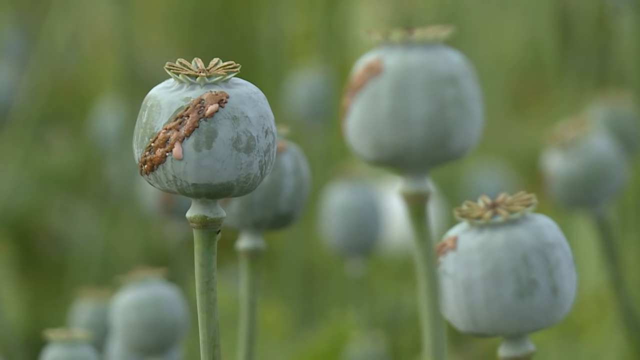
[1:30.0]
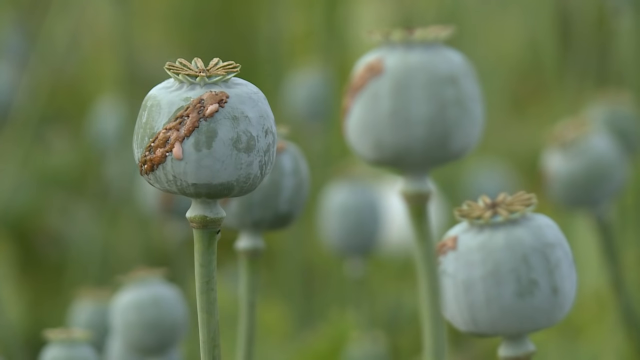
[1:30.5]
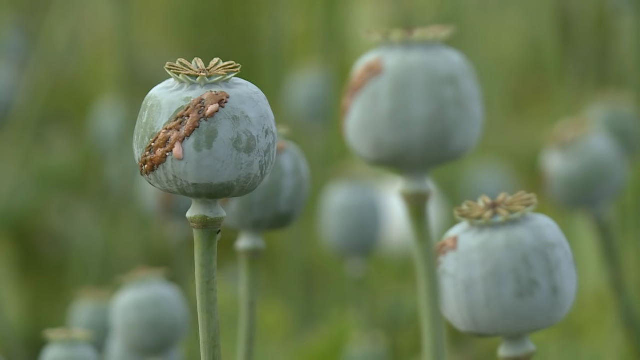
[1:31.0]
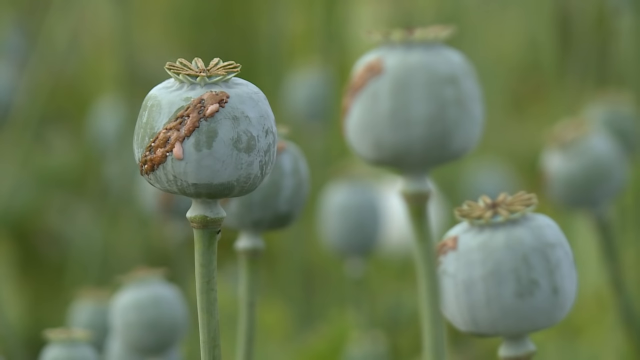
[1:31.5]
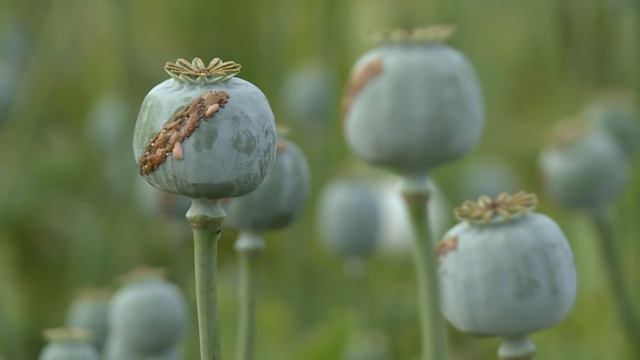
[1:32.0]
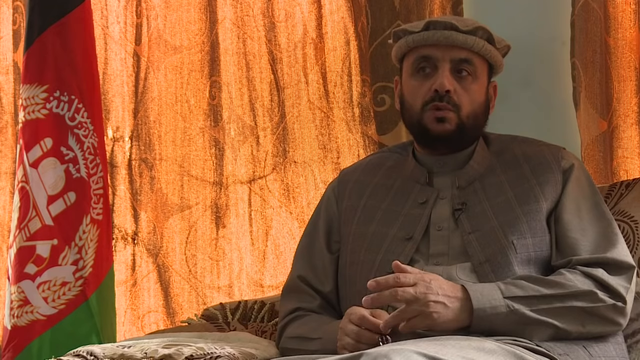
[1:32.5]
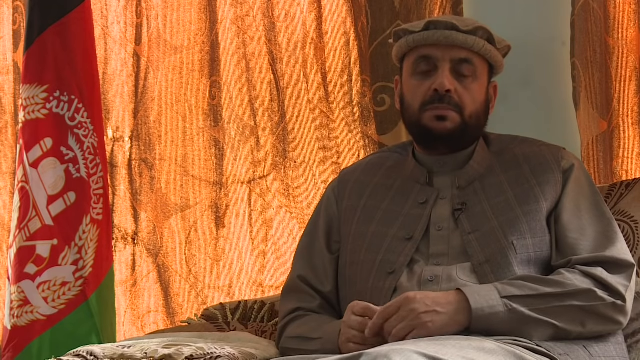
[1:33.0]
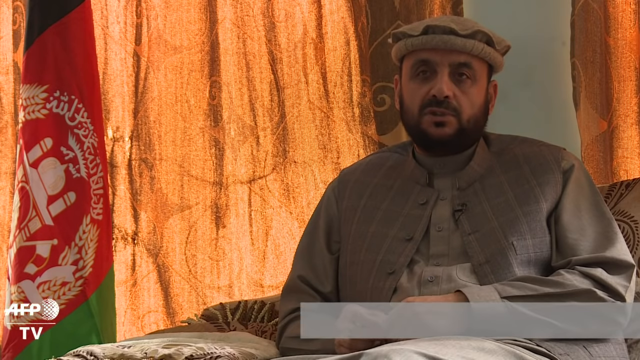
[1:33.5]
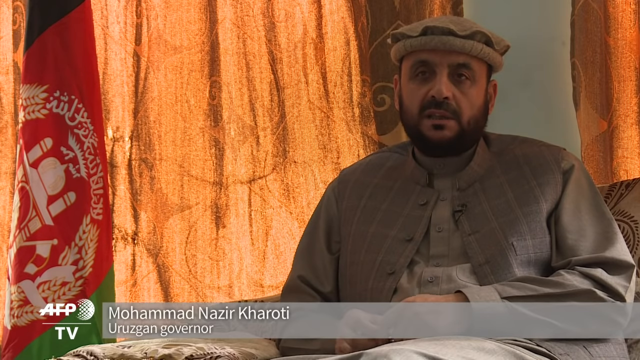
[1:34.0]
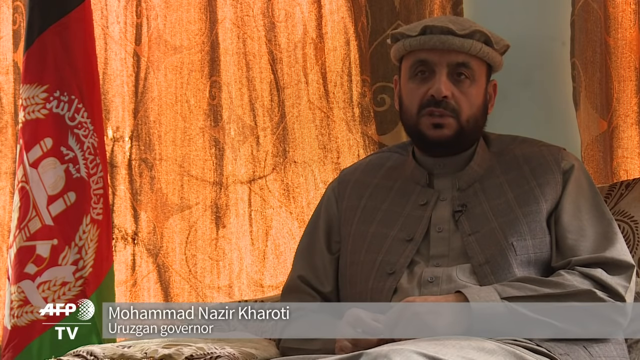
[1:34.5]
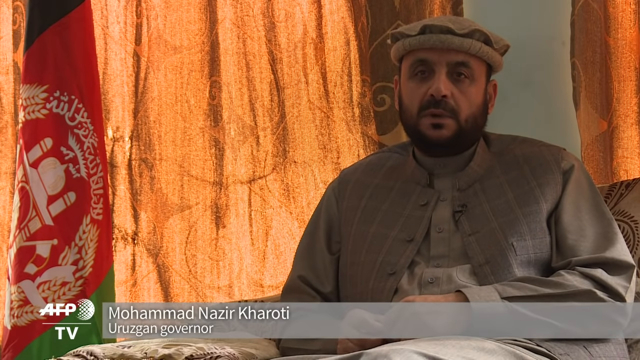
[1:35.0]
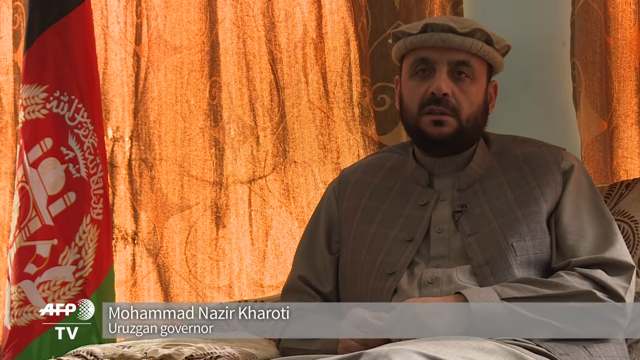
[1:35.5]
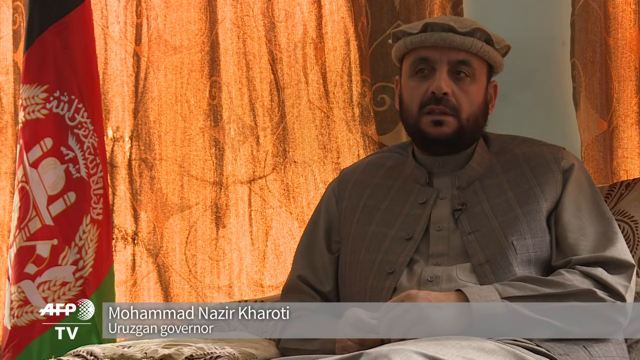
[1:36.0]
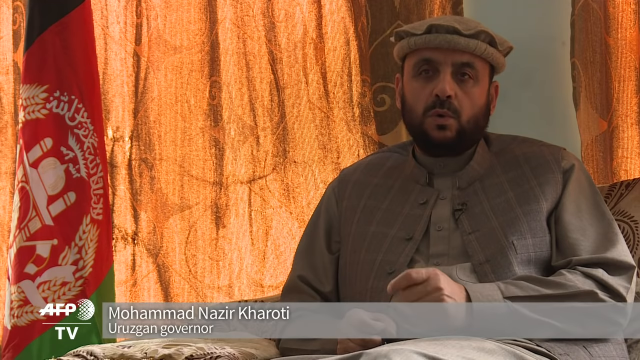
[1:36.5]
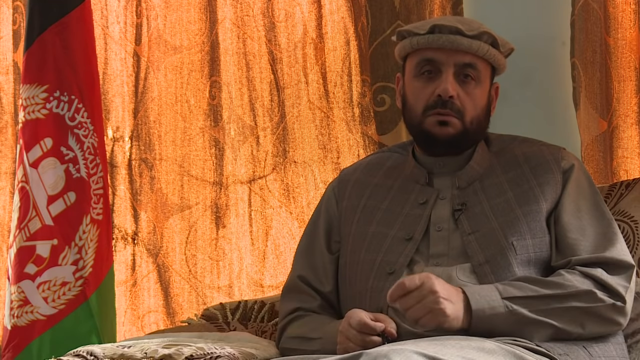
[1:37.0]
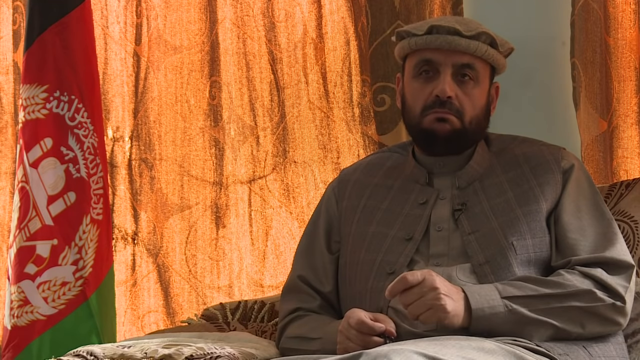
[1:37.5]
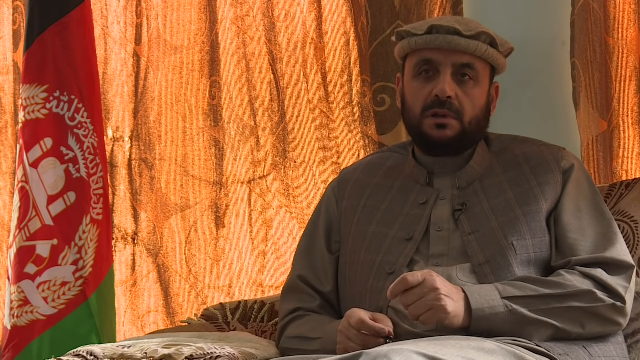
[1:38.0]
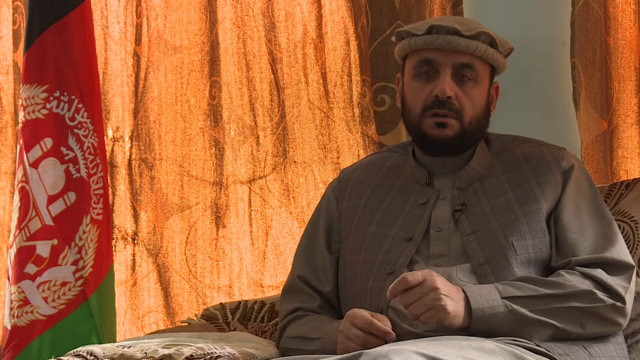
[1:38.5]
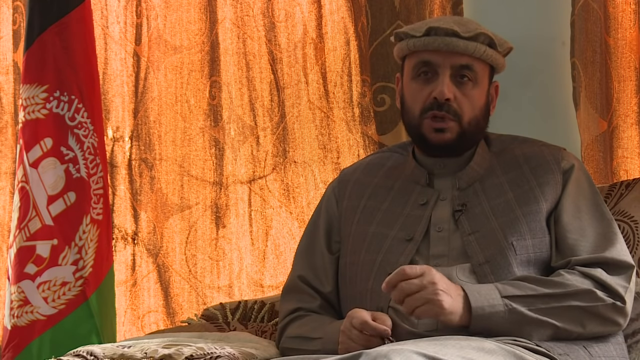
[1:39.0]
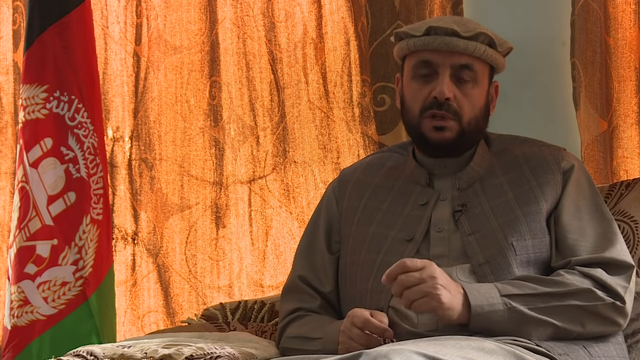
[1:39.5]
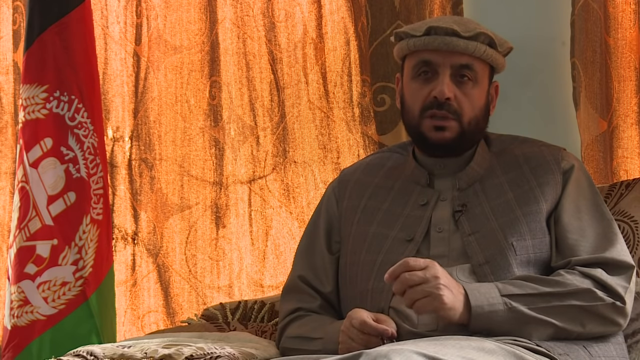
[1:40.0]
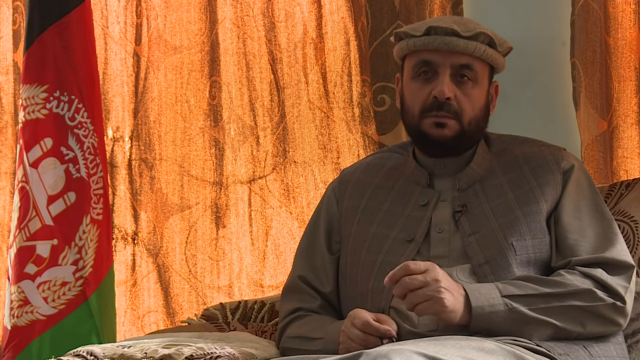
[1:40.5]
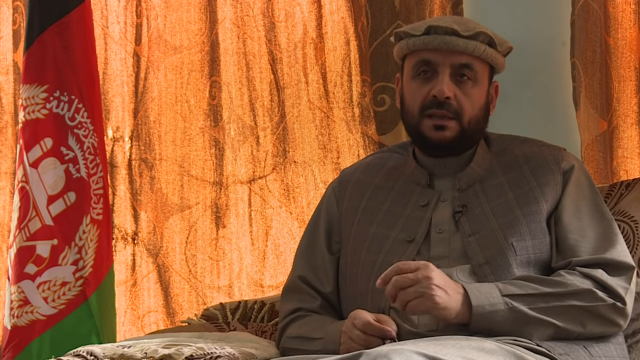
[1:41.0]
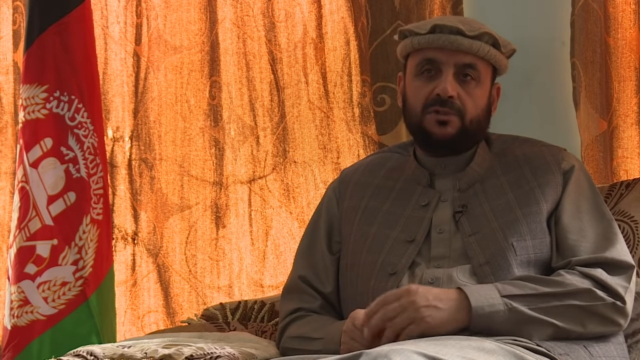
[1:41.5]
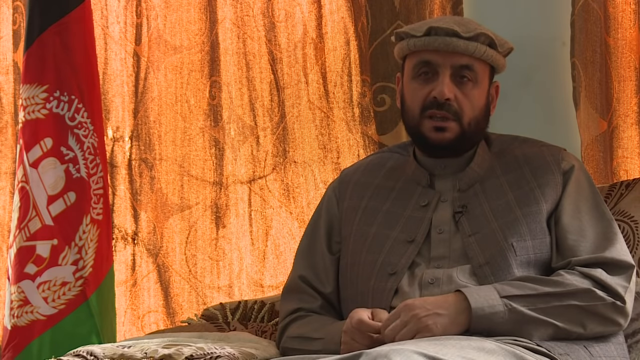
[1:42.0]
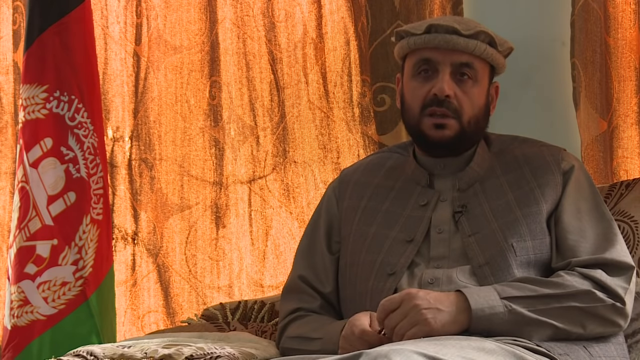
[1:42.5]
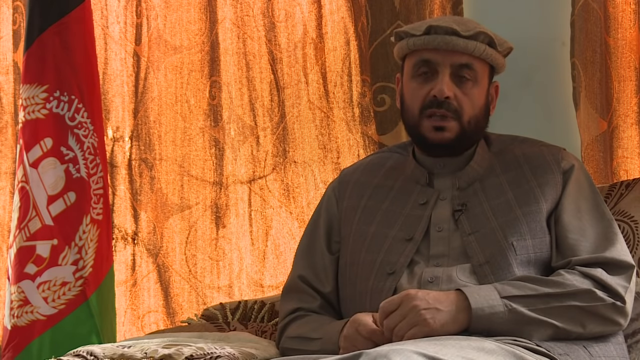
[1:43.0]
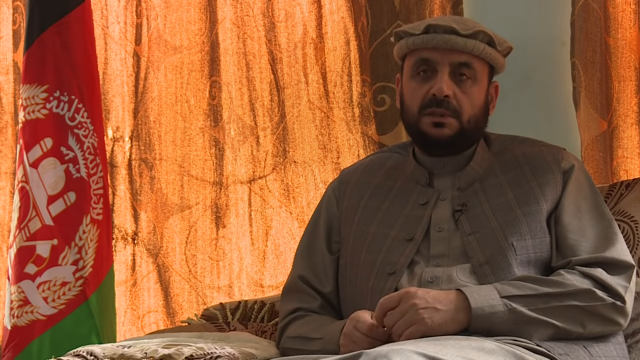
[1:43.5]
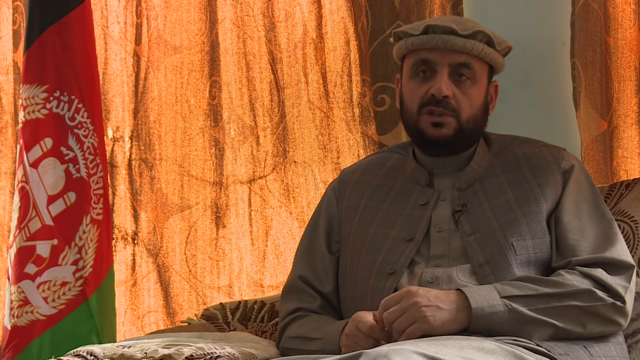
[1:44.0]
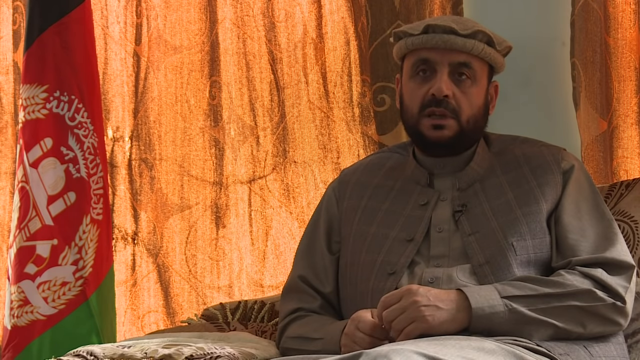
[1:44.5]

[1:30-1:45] A very close view shows poppies against a blurry green background. Three big green unopened poppy bulbs are clearly visible, with about four or five more, a little blurrier, behind them. All have some sort of brown stripe running diagonally from the top center down to the left and wrapping around the side. It then cuts to the Uruzgan governor, Mohamed Nazir Kharoti. He wears all brown with a brown hat, has a black beard and dark hair, and looks maybe in his early 40s. Behind him a kind of dark orangish-yellowish curtain hangs all the way around. On the left, in front of the hanging curtain, a red flag hangs horizontally, red with a white crest and some white writing. He keeps his right hand still in his lap; his other elbow rests in his lap while that hand moves up and down as he talks. He talks continually and looks focused, facing forward but slightly to the left, keeping eye contact with the person he is talking to. On his left hand he holds his middle finger, pointer finger and thumb together, kind of in a motion as he talks.